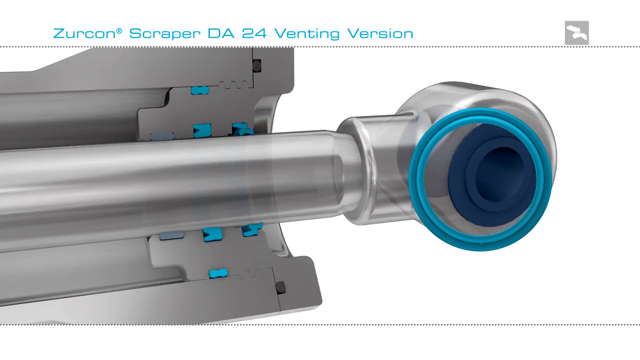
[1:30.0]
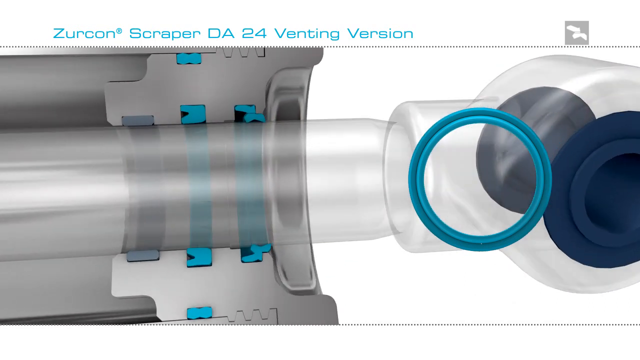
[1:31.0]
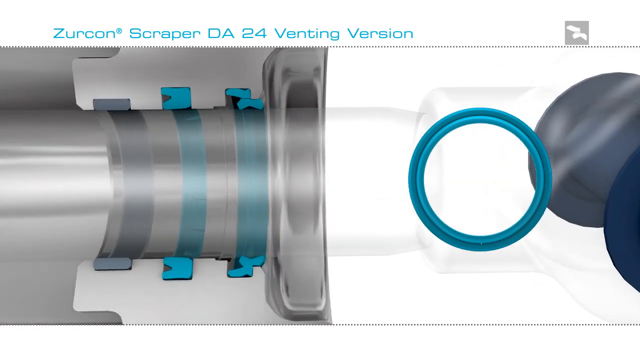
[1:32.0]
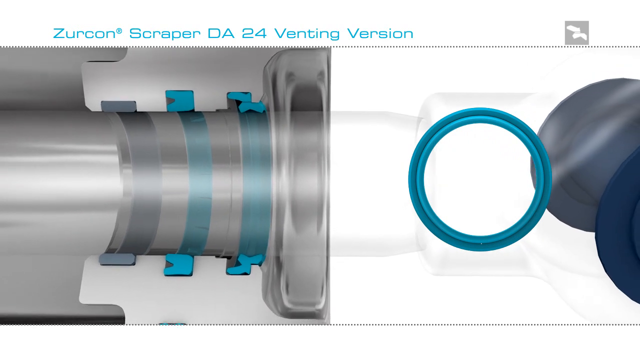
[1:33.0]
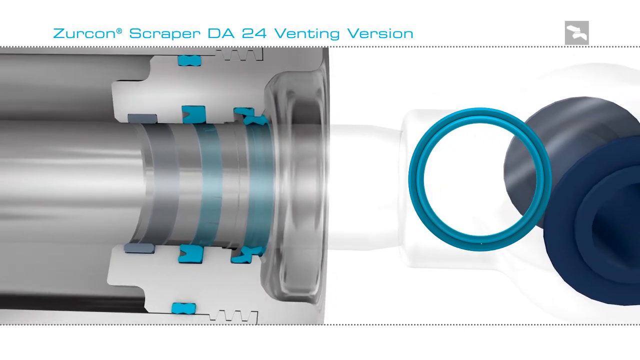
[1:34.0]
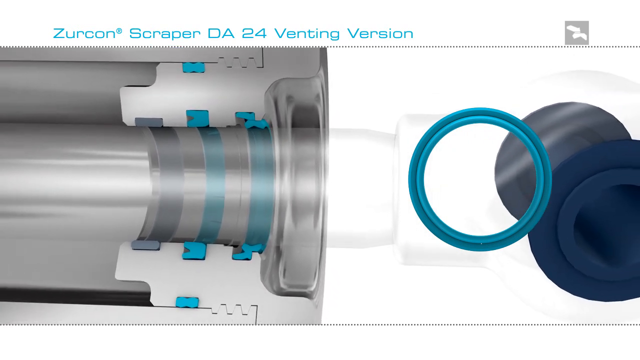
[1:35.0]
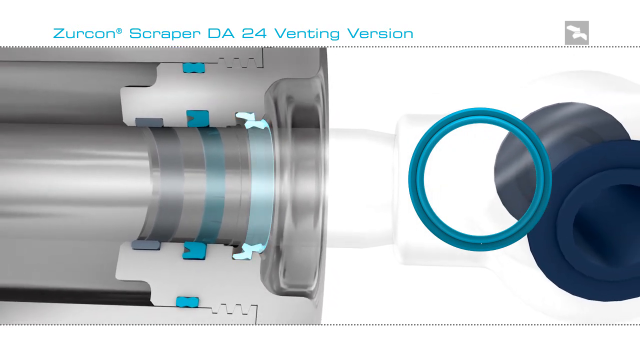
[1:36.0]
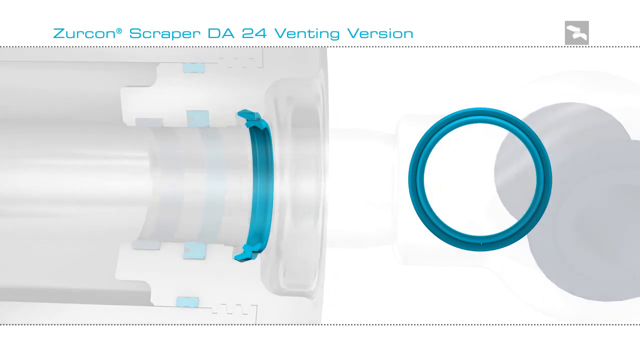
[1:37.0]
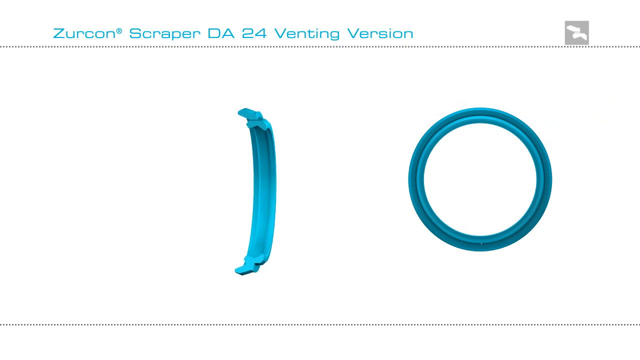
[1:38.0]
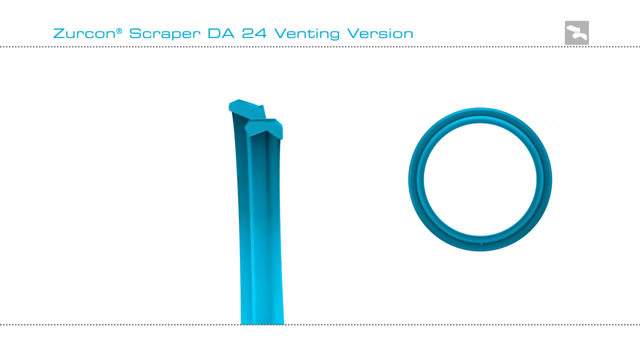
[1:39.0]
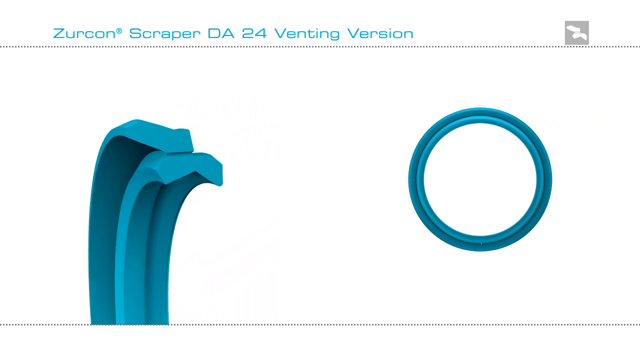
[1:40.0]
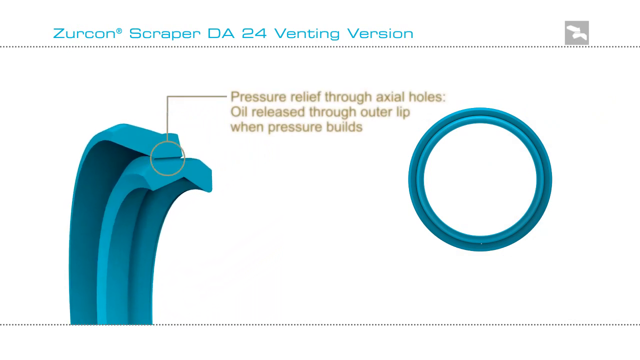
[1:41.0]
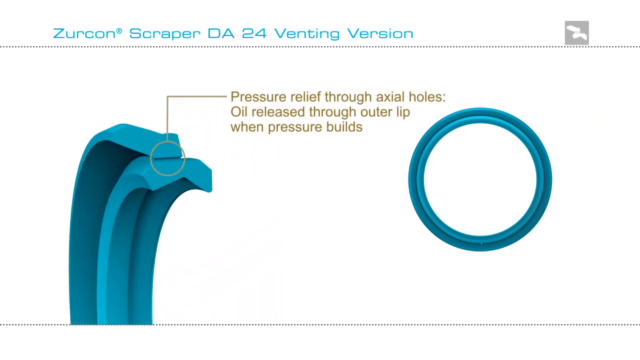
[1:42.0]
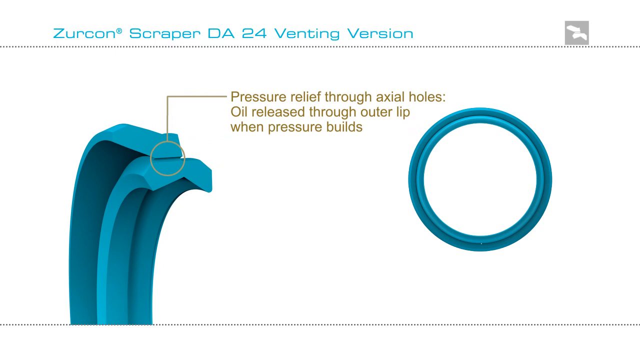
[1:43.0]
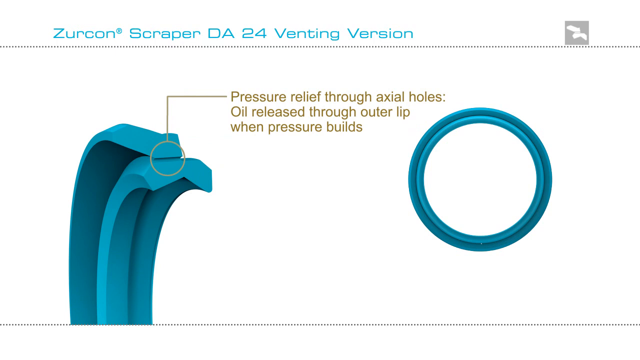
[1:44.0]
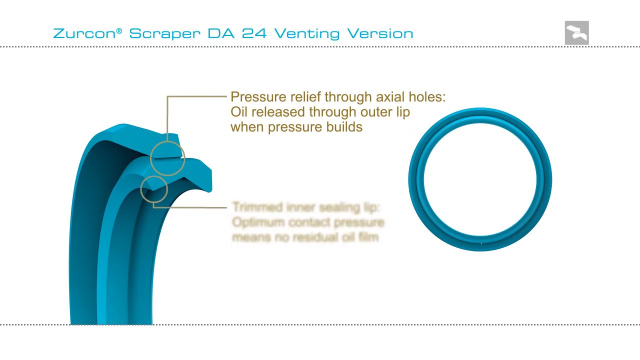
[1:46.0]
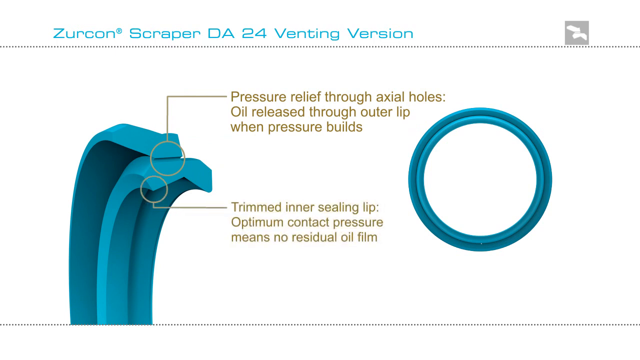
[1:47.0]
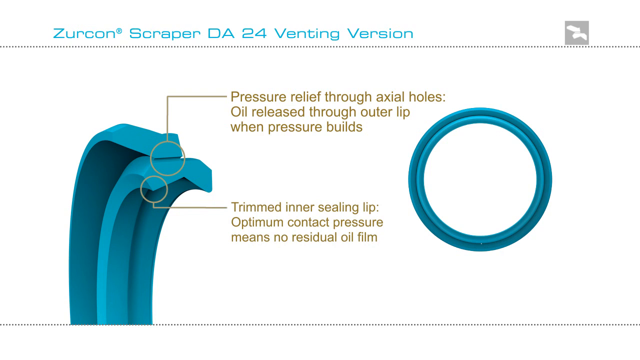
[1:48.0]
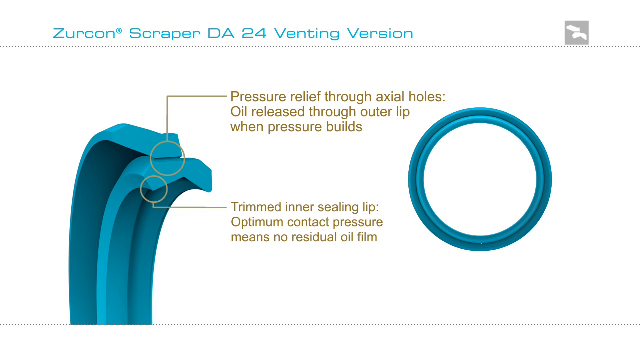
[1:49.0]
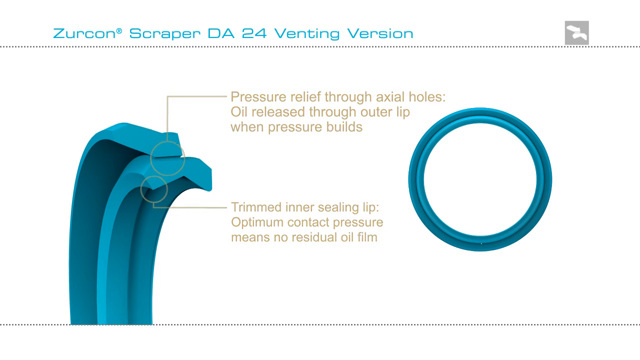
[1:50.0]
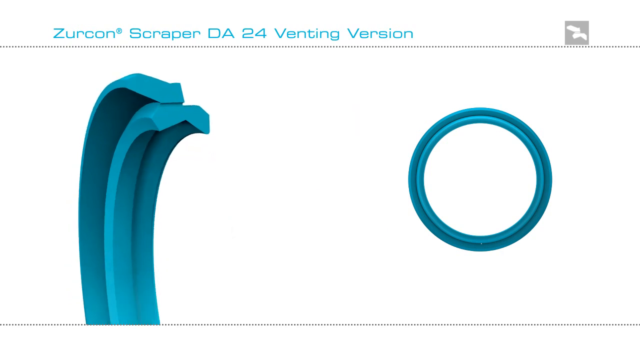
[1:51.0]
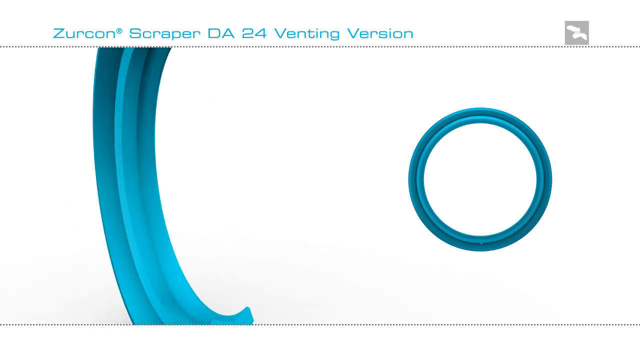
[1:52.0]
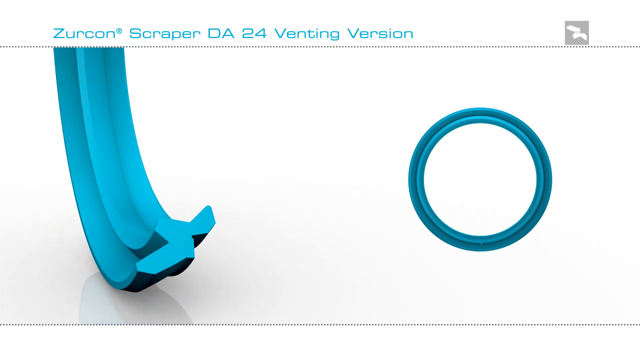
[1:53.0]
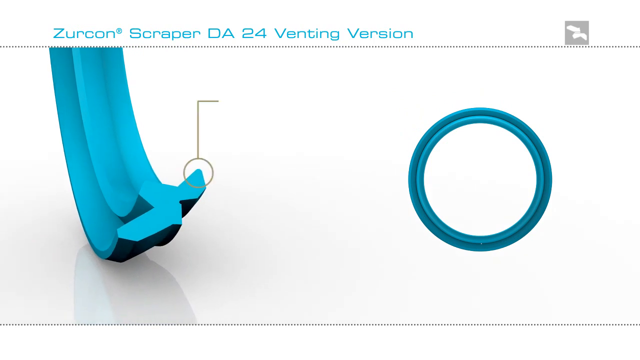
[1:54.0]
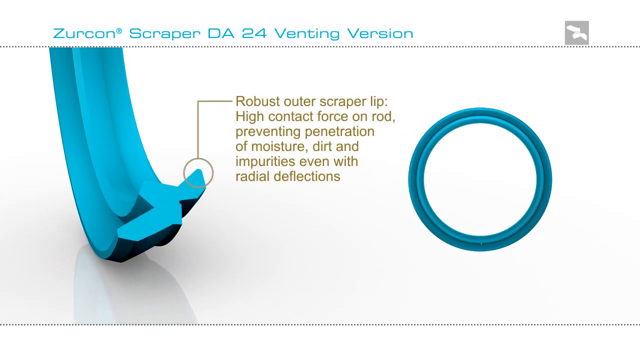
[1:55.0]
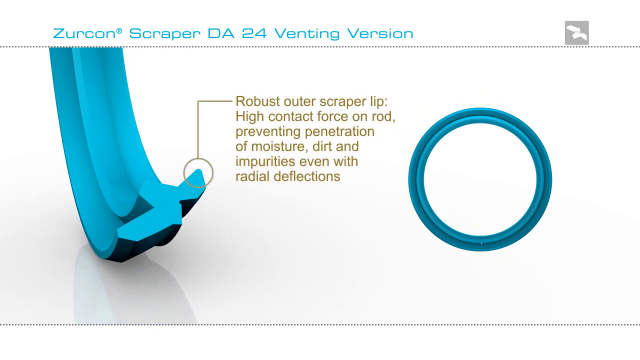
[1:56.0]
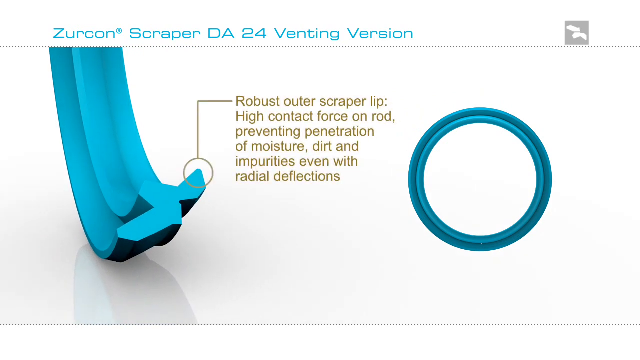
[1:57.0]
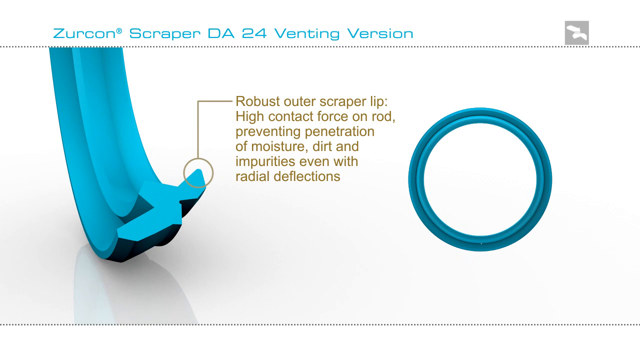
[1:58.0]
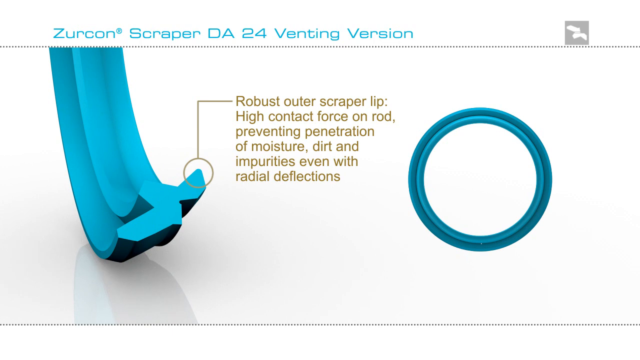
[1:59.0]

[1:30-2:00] A part that looks like part of a tractor is shown with its silver interior, with what seems to be a hole inside the device. Then a light blue part is isolated and shown in a computer-animated close-up, turned to face the interior of the piece. It is placed on the left side of the screen with text reading "pressure relief through axial holes oil release through outer lip when pressure builds". Another line points to the bottom of the piece with text reading "trimmed inner sealing lip, optimum contact pressure means no residual oil film". The text disappears and the image moves again, now focusing on the bottom of the piece, where a line with greenish-brown text reads "robust outer scraper tip, high contact force on rod preventing penetration of moisture, dirt, and impurities, even with radio deflections".